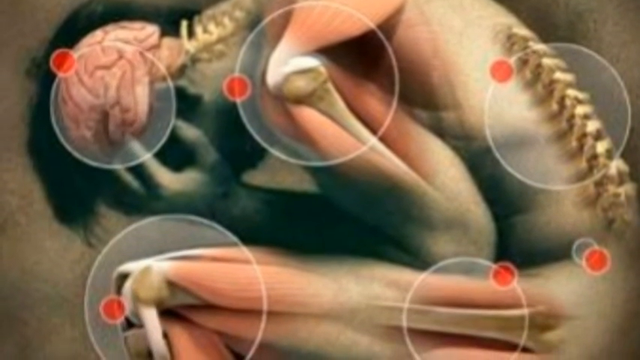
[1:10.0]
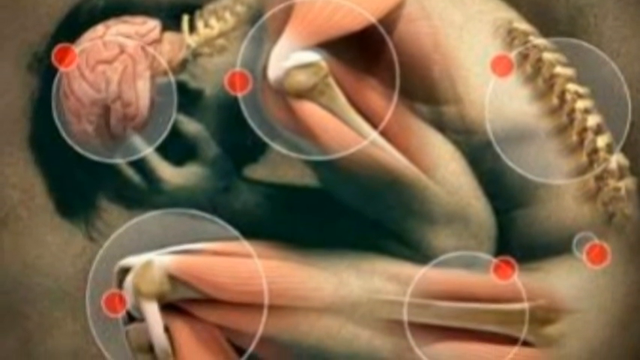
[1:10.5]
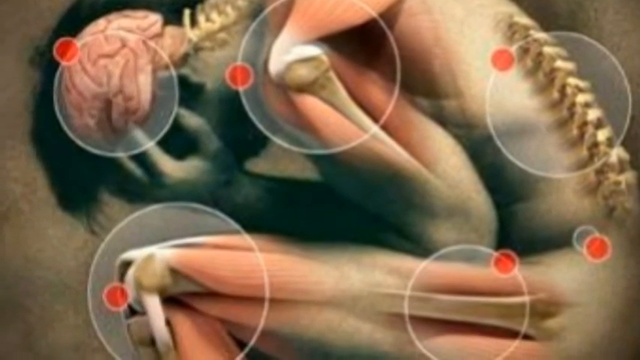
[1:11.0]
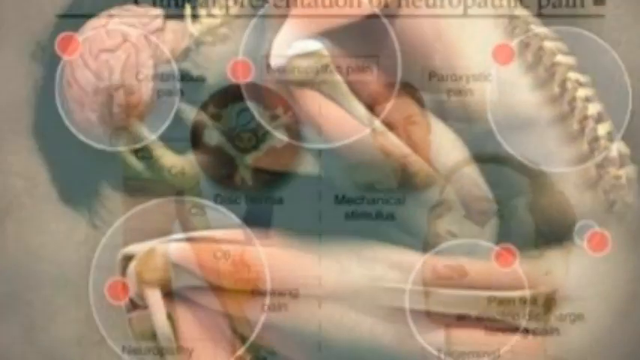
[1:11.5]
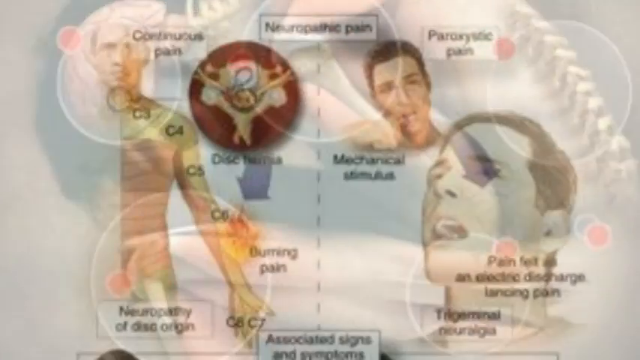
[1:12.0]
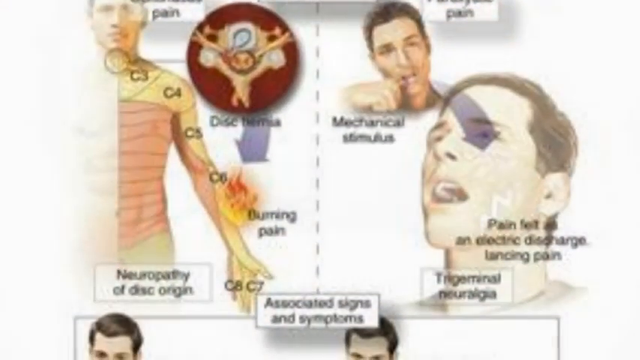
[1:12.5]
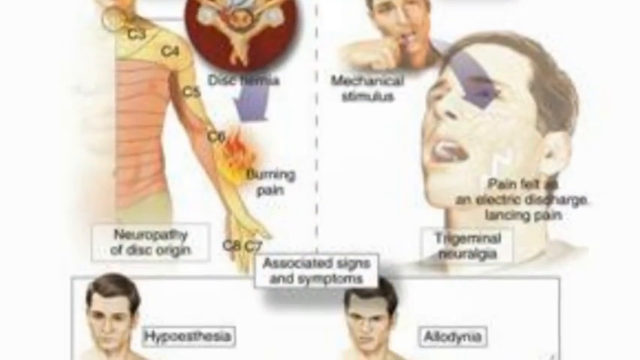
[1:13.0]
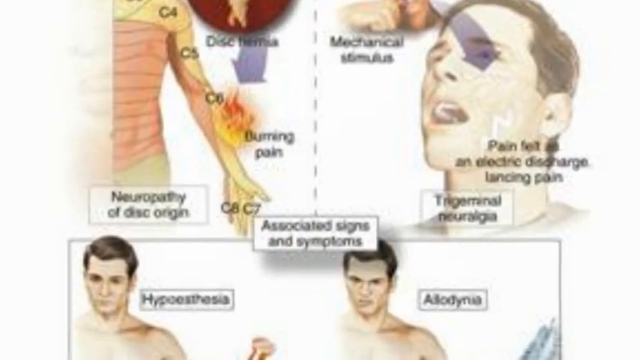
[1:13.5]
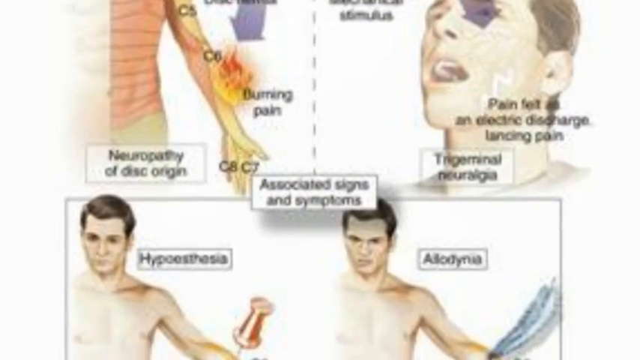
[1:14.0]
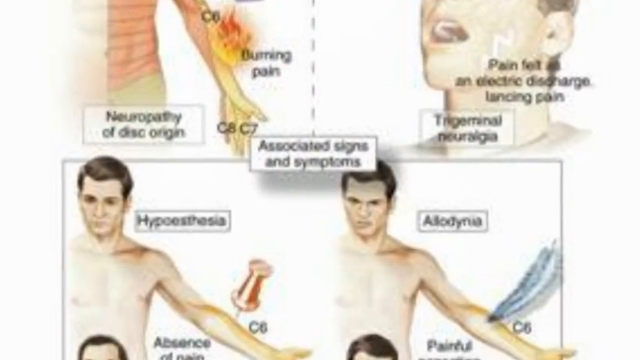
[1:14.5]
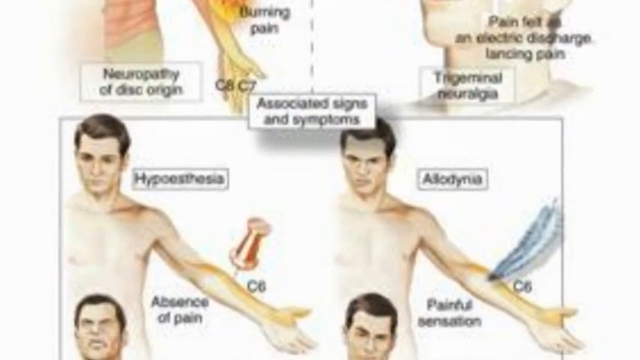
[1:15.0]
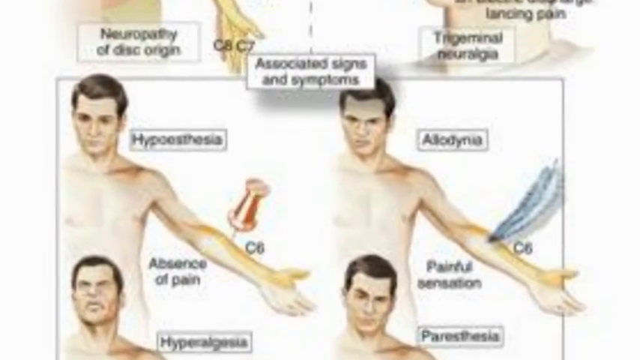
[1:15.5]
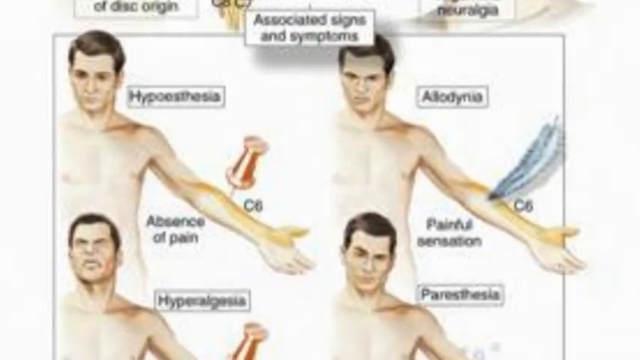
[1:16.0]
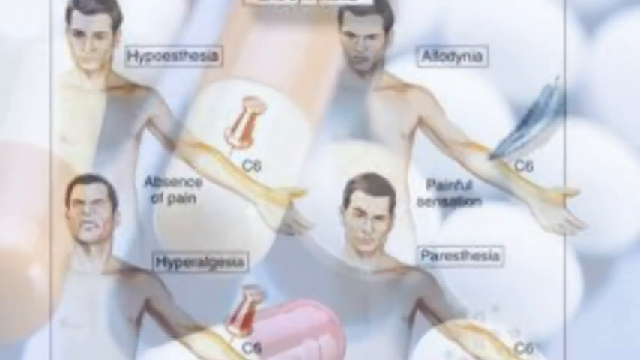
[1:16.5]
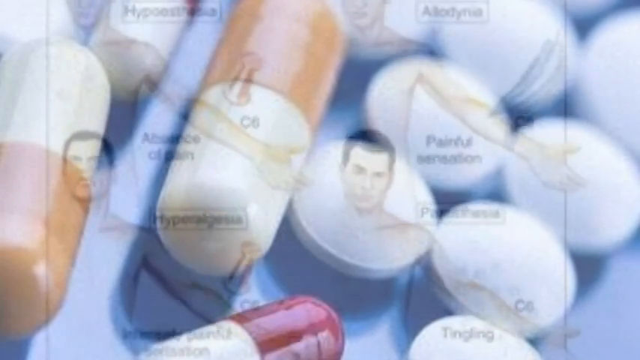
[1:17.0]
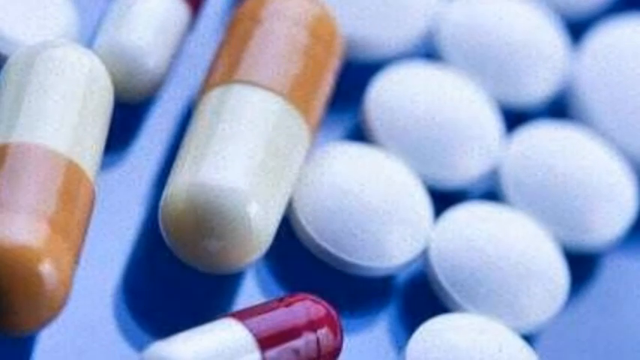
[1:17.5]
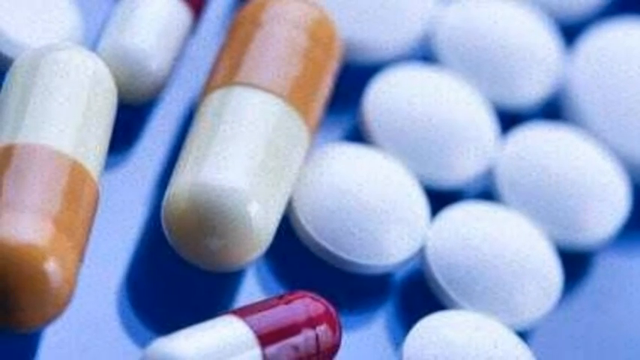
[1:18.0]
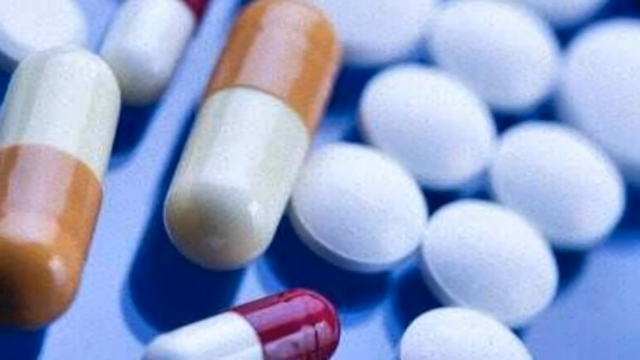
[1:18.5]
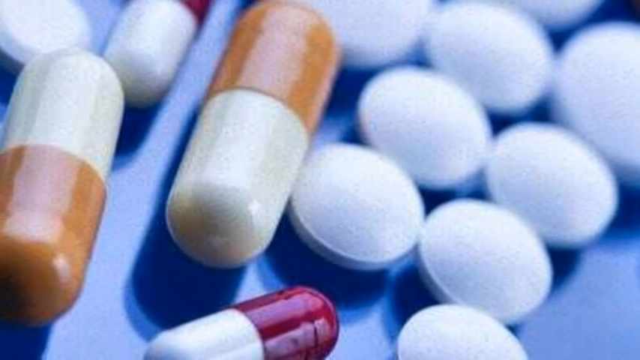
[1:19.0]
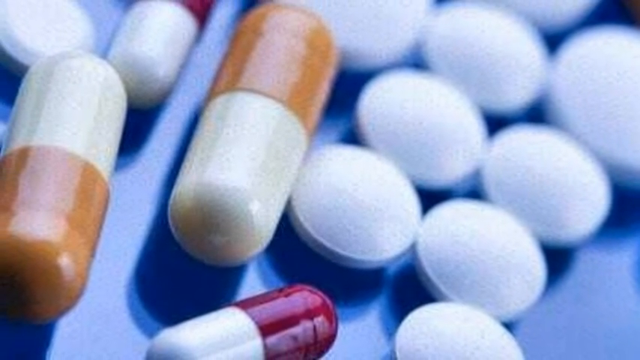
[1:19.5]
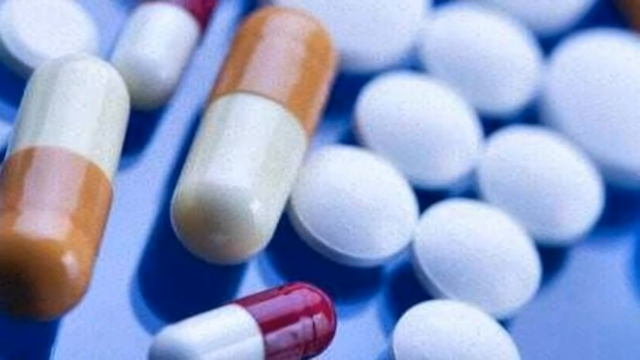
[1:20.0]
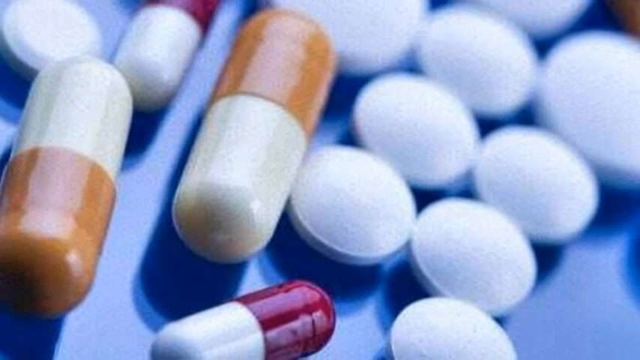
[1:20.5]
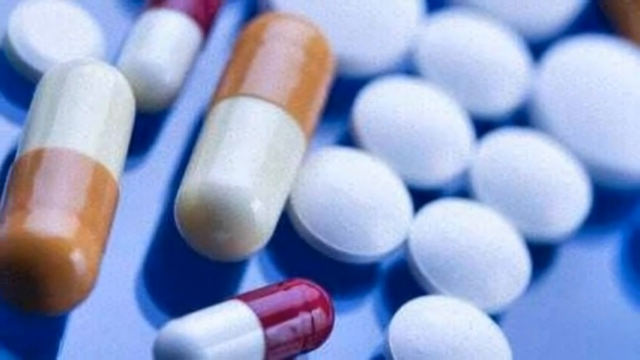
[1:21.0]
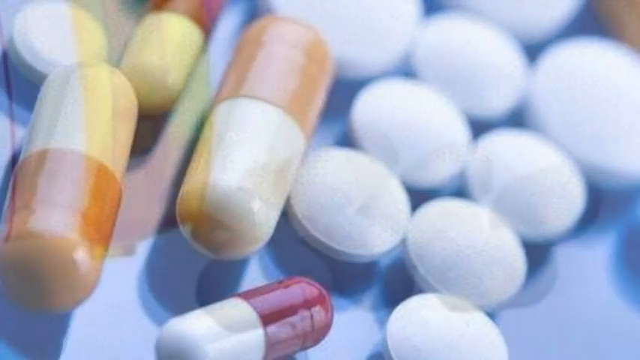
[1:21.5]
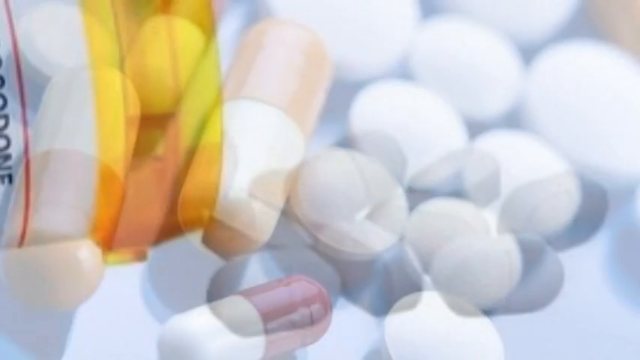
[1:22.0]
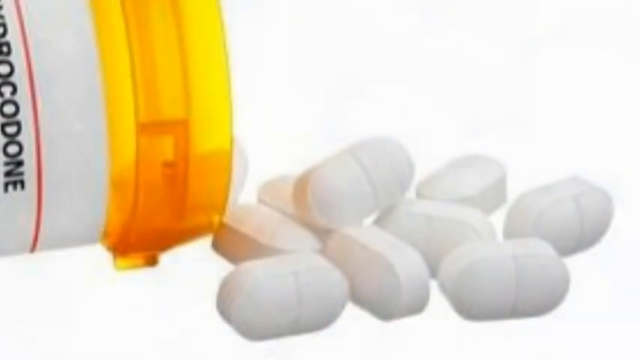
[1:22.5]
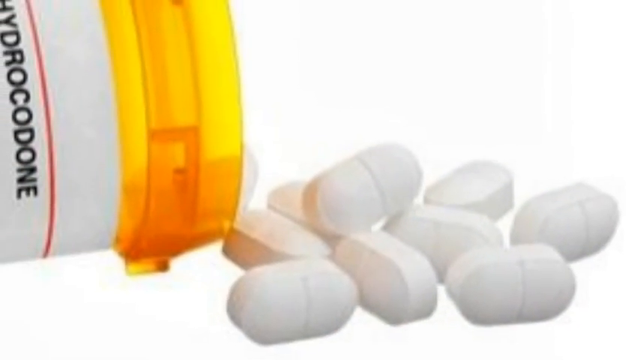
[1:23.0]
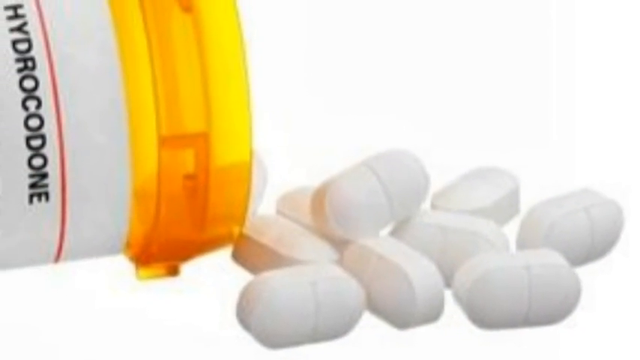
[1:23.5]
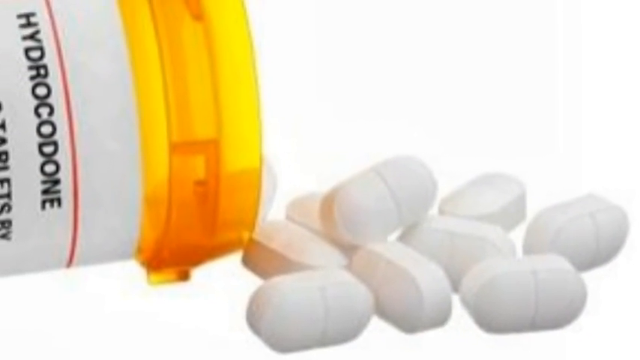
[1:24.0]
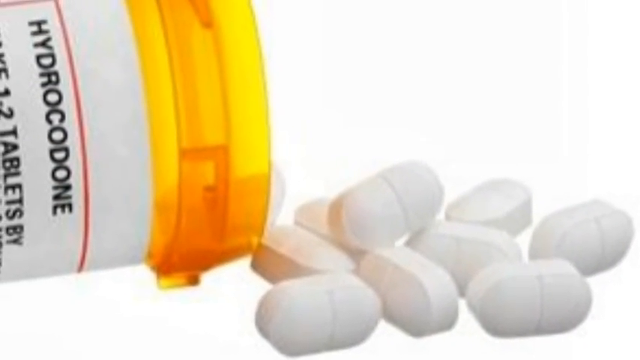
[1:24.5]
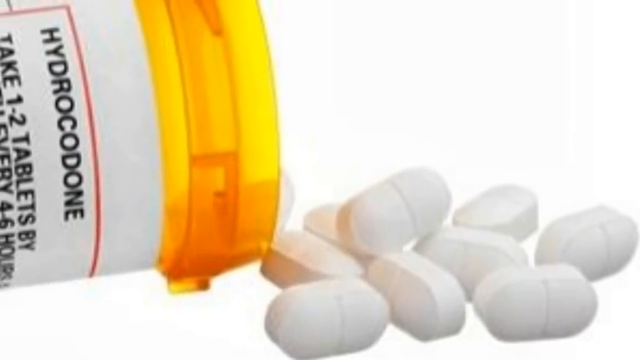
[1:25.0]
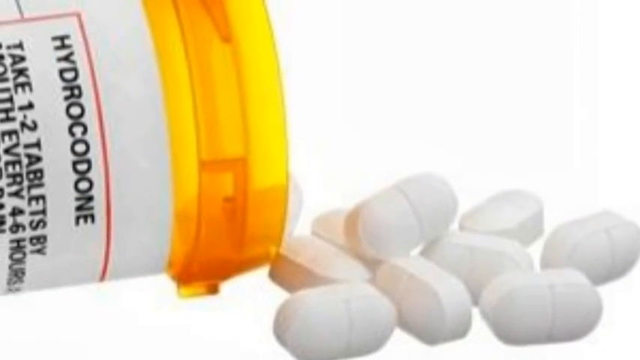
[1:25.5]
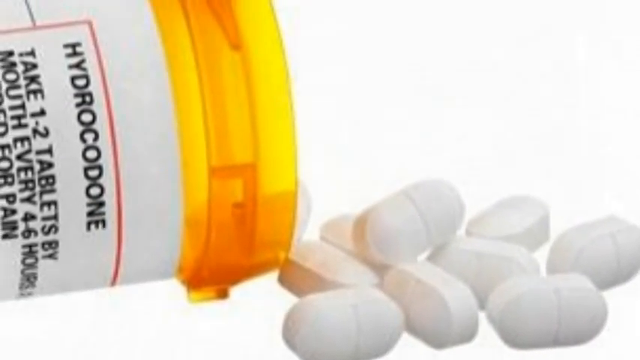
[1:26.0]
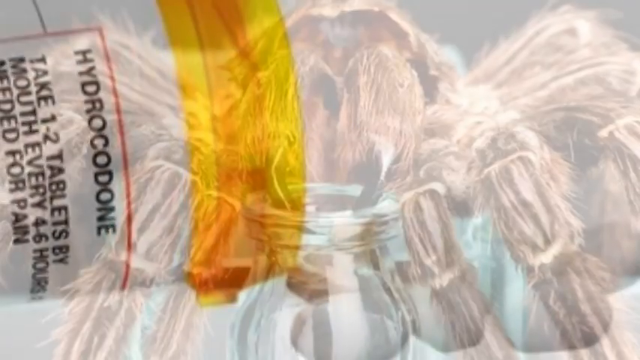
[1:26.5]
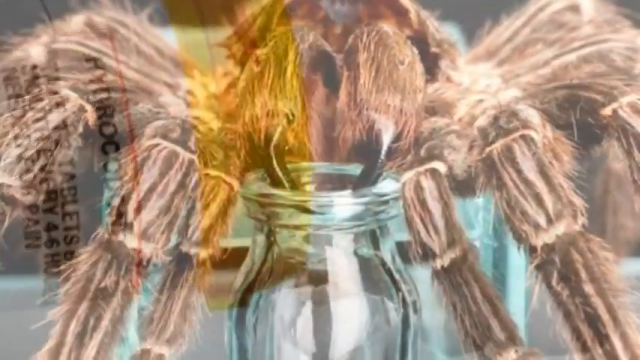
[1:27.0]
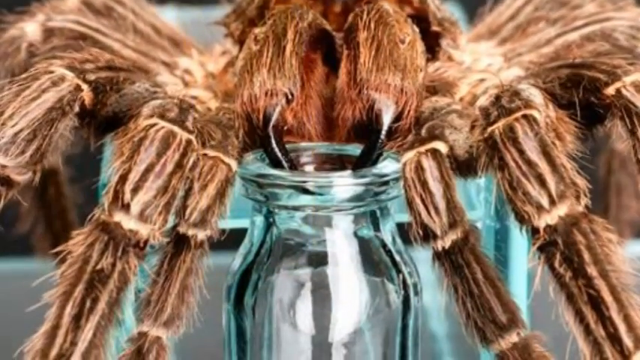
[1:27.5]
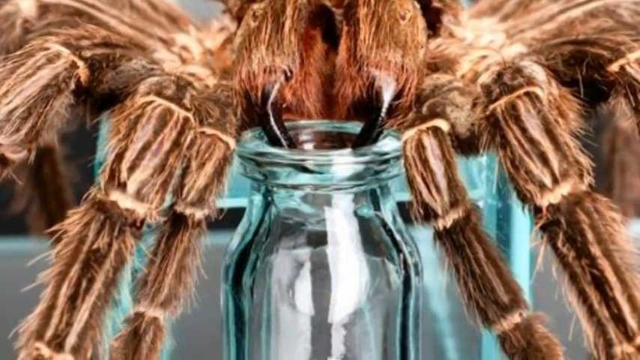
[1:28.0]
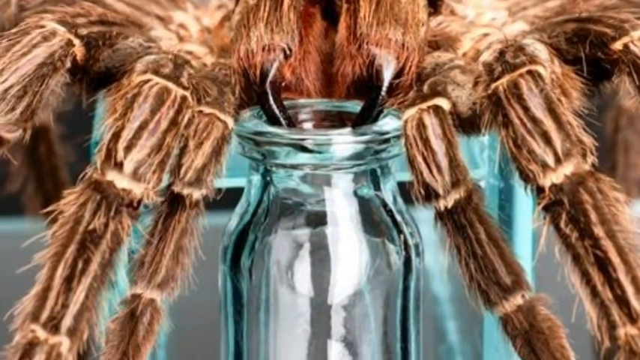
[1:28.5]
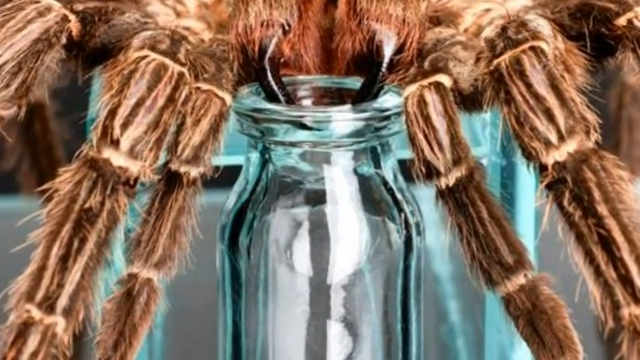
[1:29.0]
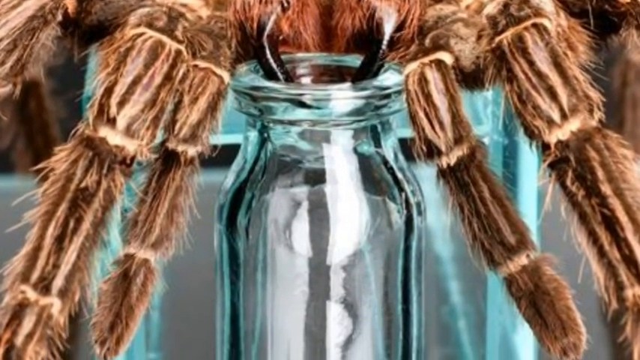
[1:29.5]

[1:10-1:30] A partial cutaway shows a person in pain, bending over, doubled over. The view scrolls down and dissolves to another diagram that apparently shows where the pain would affect. On the left side of the screen is a partial depiction of a man with his palms facing outward, from his shoulder to his left hand, labeled with segments including C3, C4, C5 and C6, and C7 or C8. In the C6 area, which corresponds to his forearm, a depiction of fire appears next to the words "burning pain". In a maroon circle inset near the center of the graphic is what appears to be some type of cross-section, maybe of the spine, or of the neck where it merges into the spine. Near the bottom of the left side of the screen is the title "Neuropathy of disc origin", and at the center bottom of the screen is "Associated signs and symptoms". On the right side is a picture of a man's head with comments on the type of pain, including "pain featured as an electrical discharge" and "Lansing pain", along with other words. The camera tilts down further to the part of the graphic focusing on pain in the C6 region of the arm. The picture then dissolves to a close-up of various pills and capsules. Next, a pill bottle of painkillers labeled "Hydrocodone" is emptied out, with 9 pills in the lower right side of the frame. The video then dissolves to a very hairy spider with huge fangs injecting its venom into a glass jar.